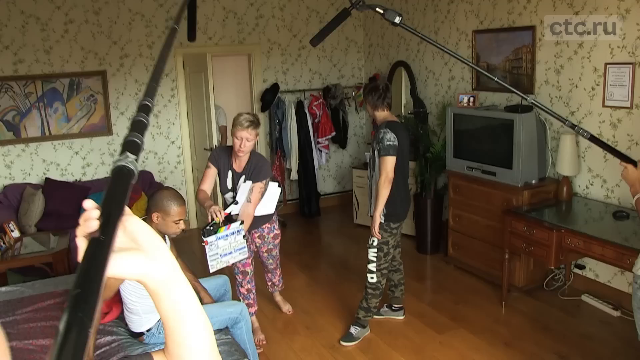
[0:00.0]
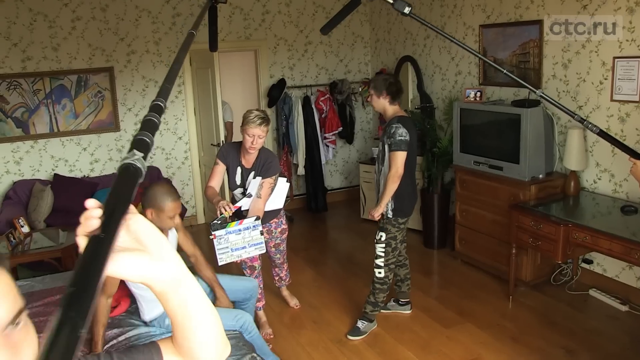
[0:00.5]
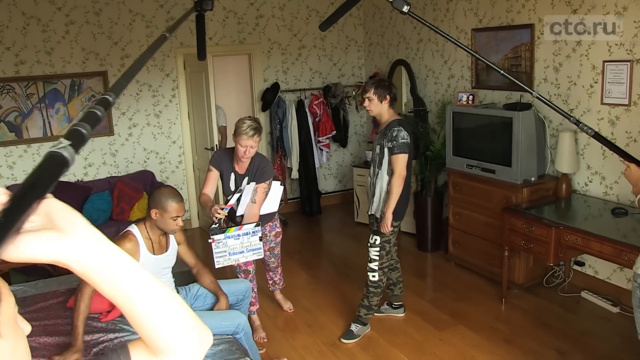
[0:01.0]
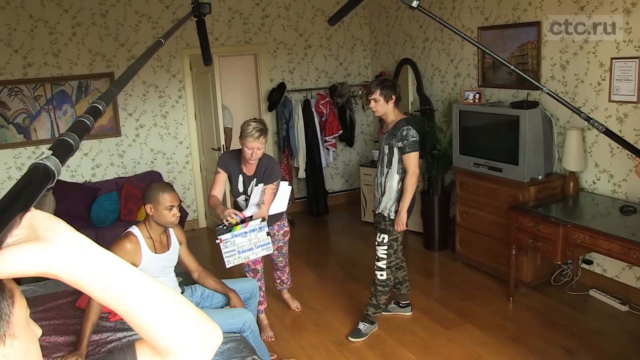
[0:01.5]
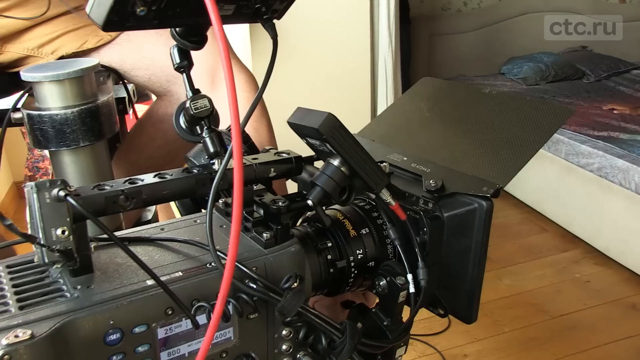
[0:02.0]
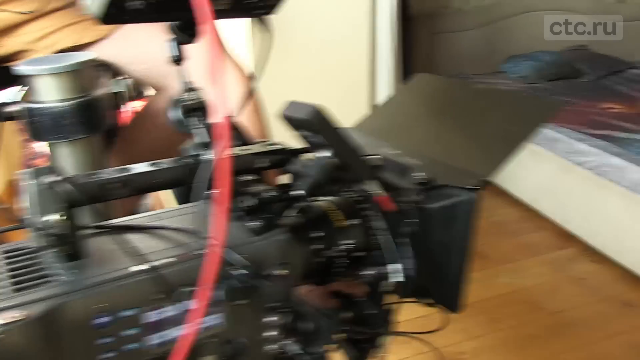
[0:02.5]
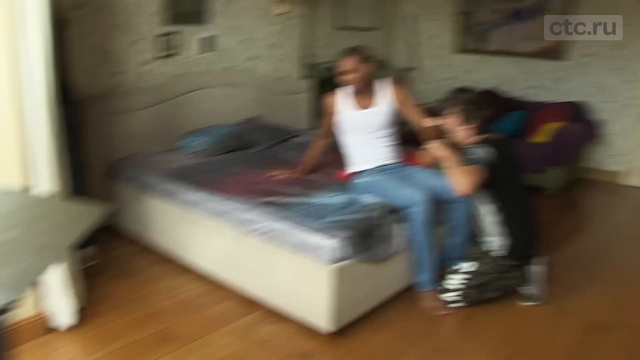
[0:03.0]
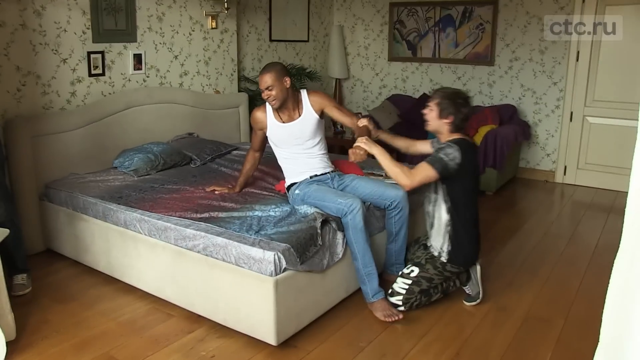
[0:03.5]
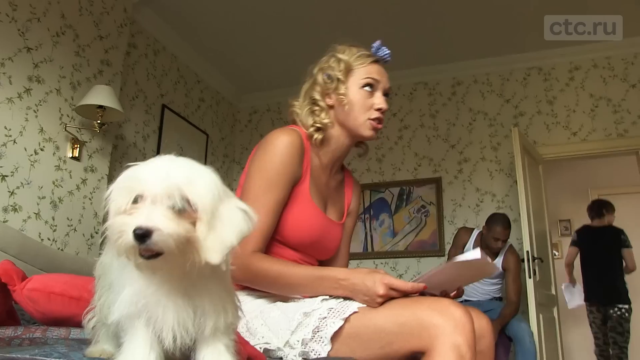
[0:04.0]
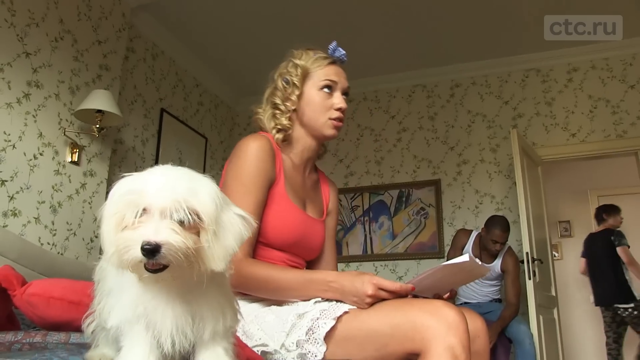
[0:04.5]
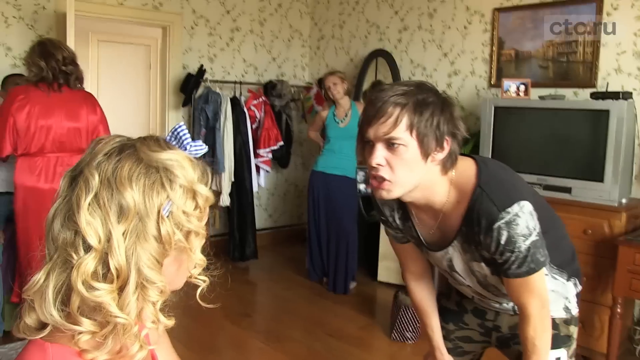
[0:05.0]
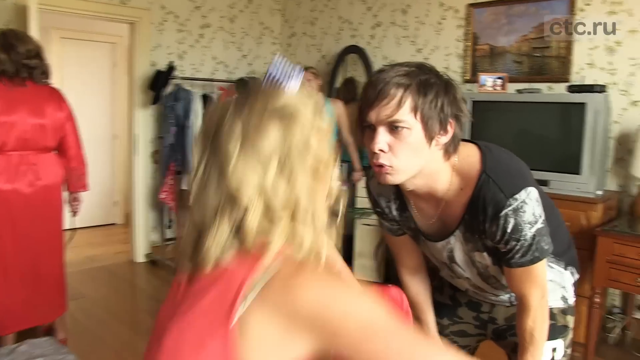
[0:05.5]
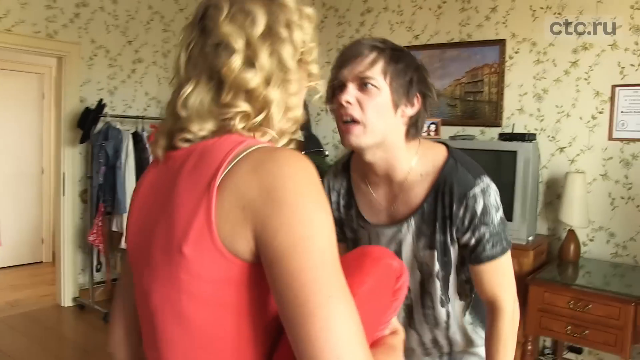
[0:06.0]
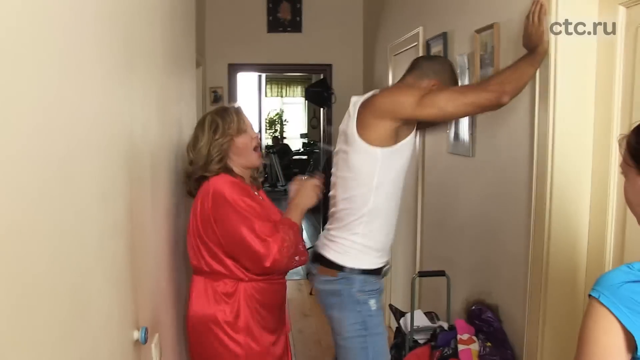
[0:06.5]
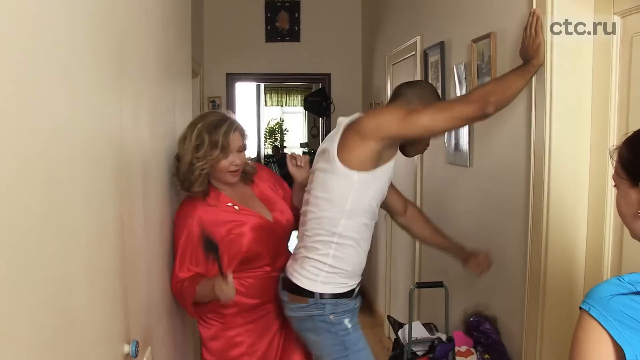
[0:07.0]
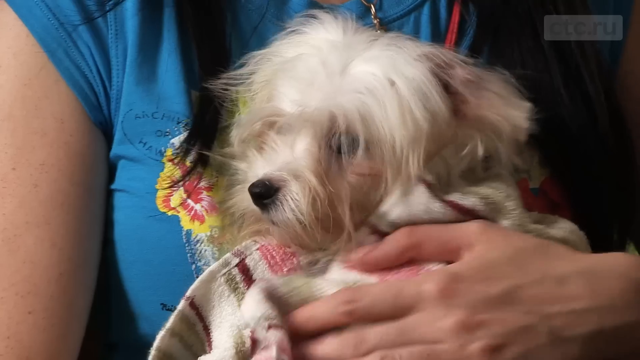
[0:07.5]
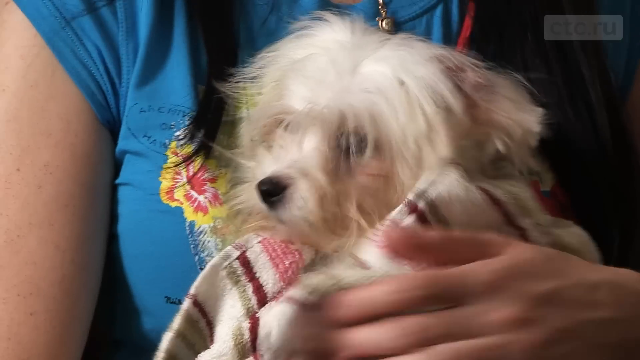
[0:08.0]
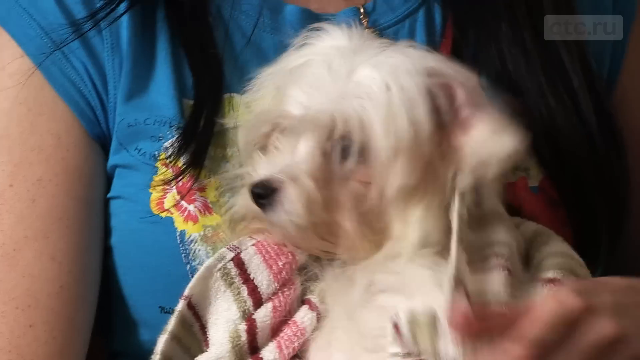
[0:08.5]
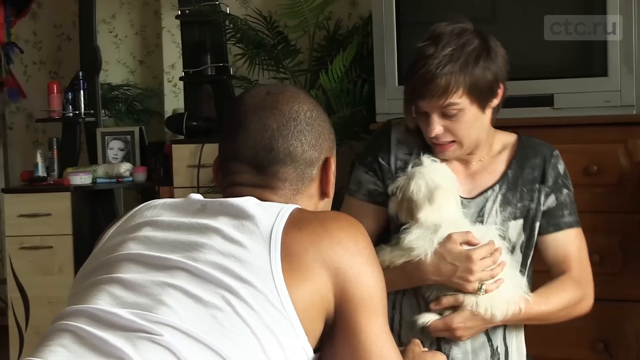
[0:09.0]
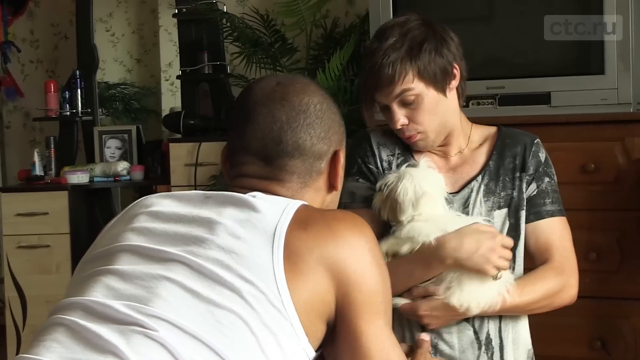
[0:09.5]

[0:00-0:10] It looks like people are filming a TV show in a setting that appears to be an apartment, maybe a one-room apartment. There is a little dog, and there might be two different dogs. There appears to be a black man, a white man, one camera, and a mixed-race girl with blonde hair. An older lady smacks a guy with a hairbrush. An older TV is in the room. "ctc.ru" appears at the top of the screen. Another lady in a blue shirt seems to be there as well. One of the directors appears with a clapperboard. A woman is not wearing any shoes, and one of the men isn't wearing shoes either. One guy tries to bite the other guy. They look like they might be sitting on a waterbed or something similar.